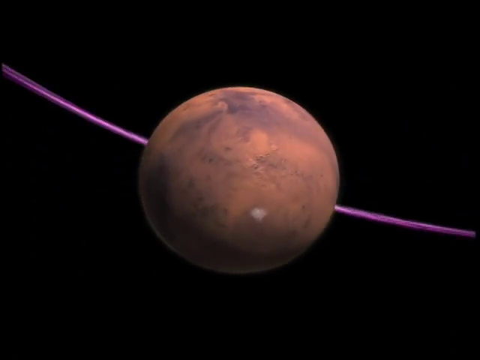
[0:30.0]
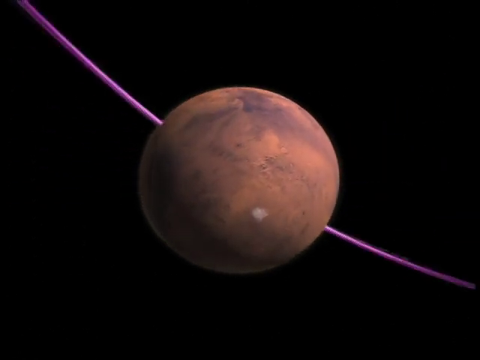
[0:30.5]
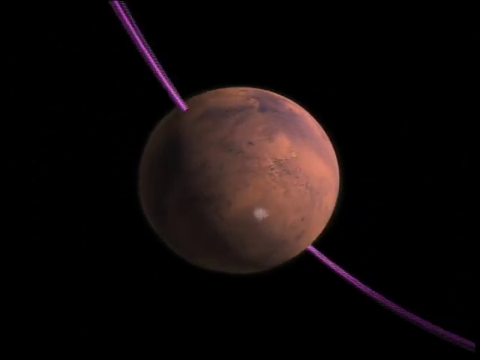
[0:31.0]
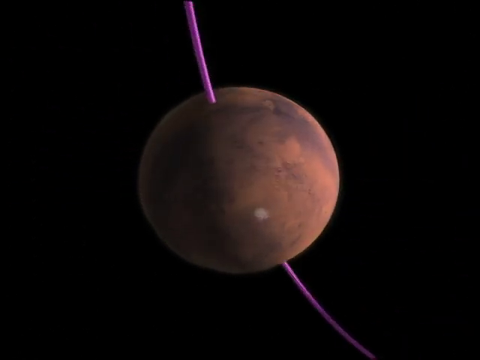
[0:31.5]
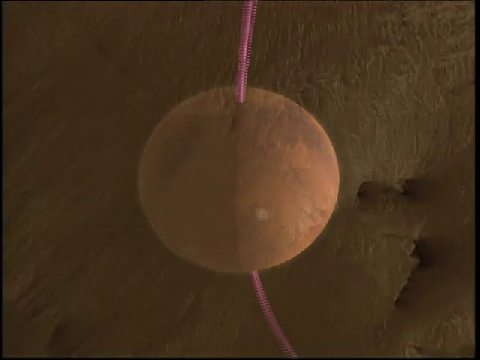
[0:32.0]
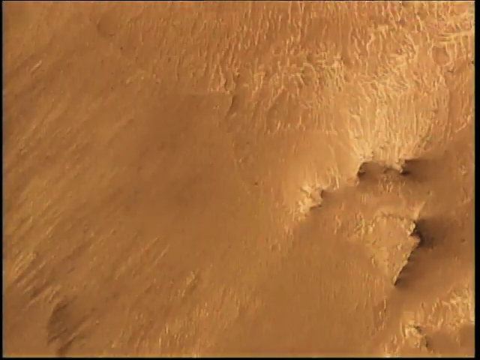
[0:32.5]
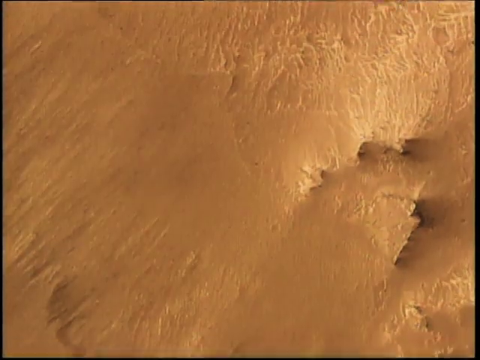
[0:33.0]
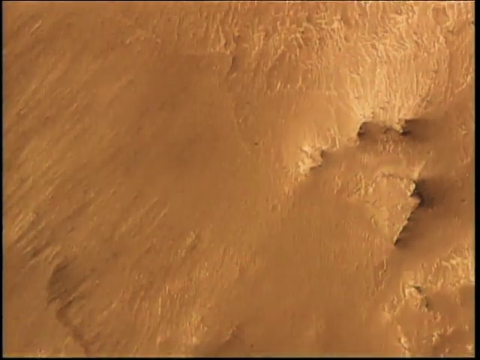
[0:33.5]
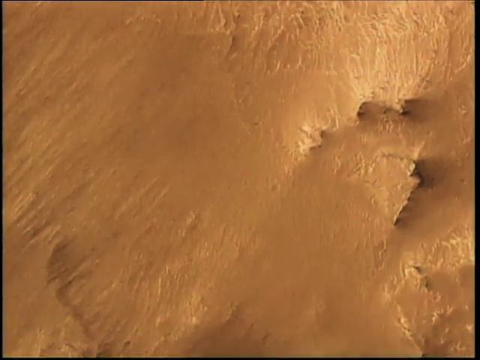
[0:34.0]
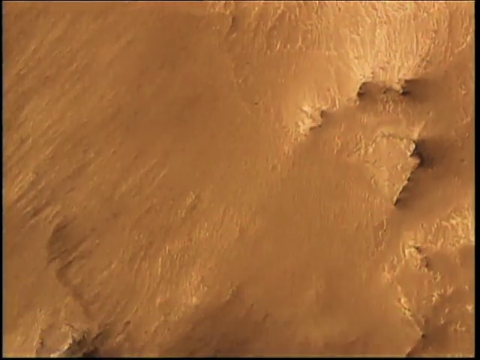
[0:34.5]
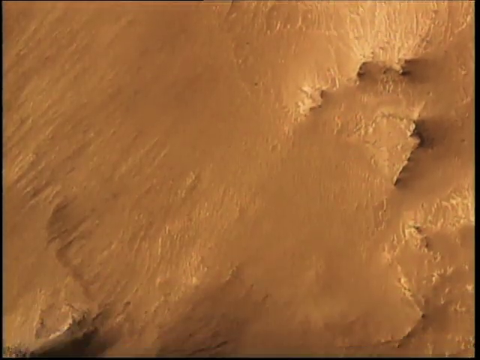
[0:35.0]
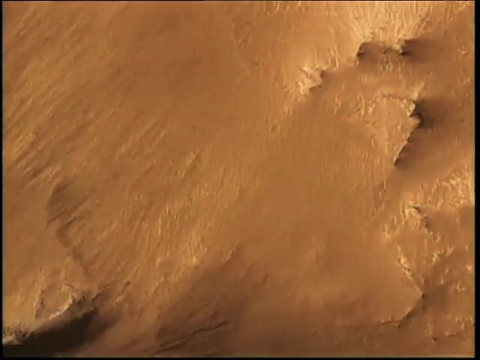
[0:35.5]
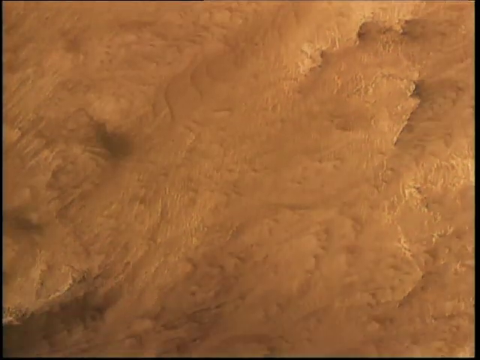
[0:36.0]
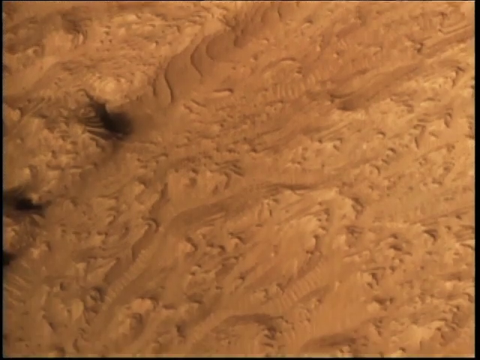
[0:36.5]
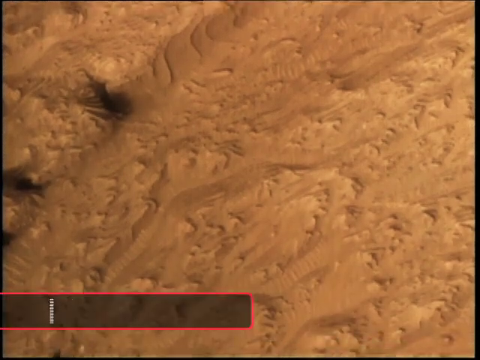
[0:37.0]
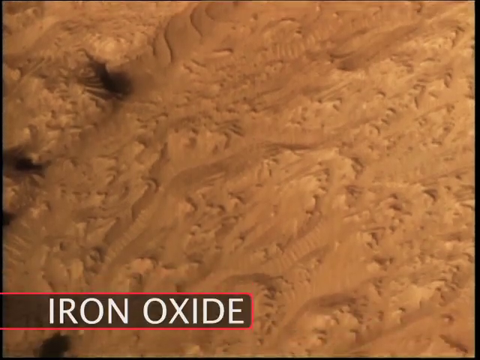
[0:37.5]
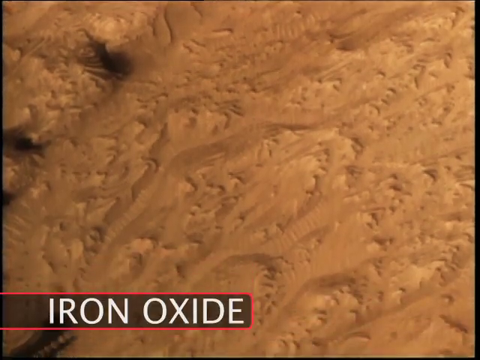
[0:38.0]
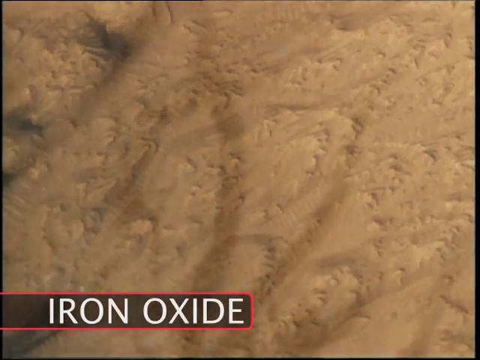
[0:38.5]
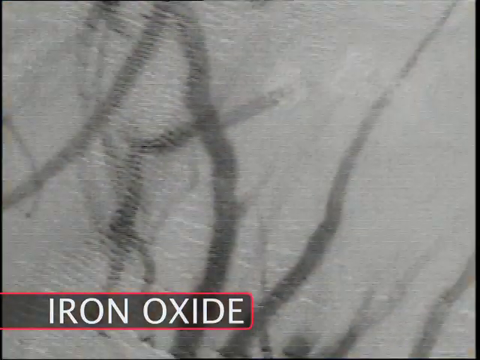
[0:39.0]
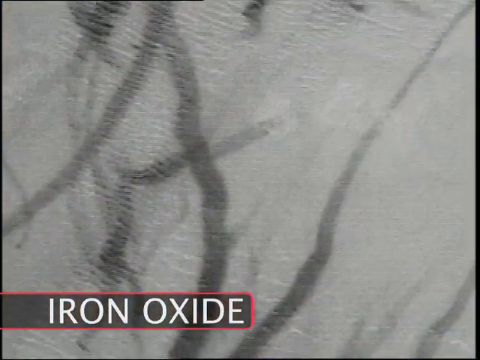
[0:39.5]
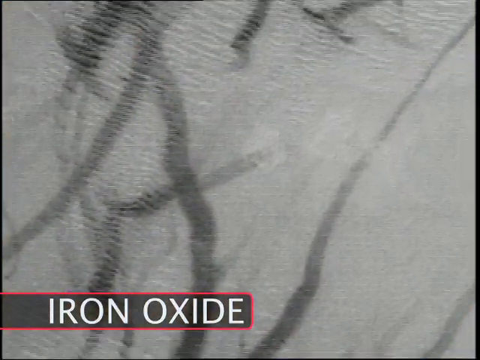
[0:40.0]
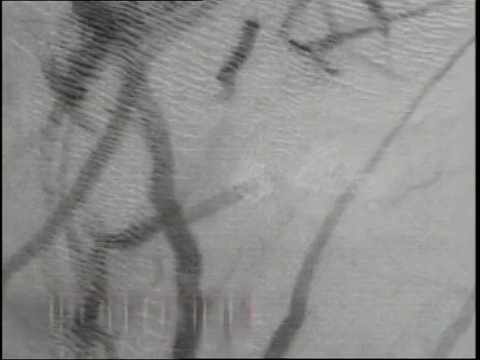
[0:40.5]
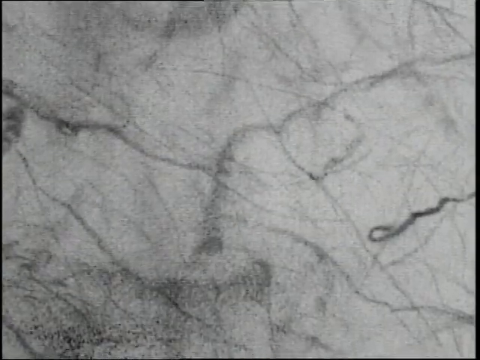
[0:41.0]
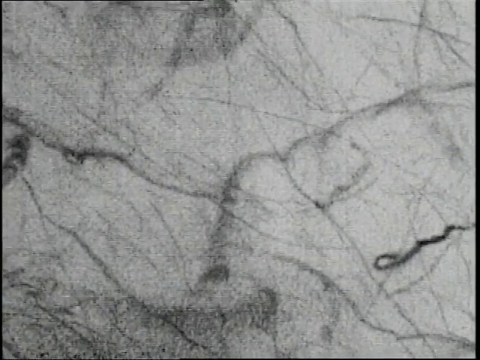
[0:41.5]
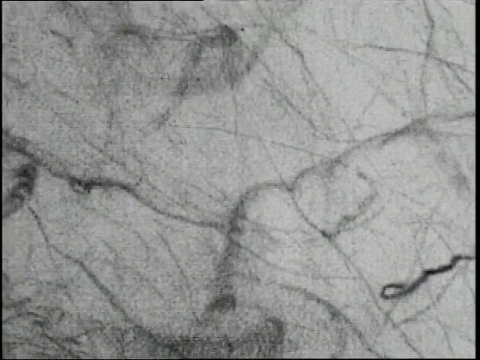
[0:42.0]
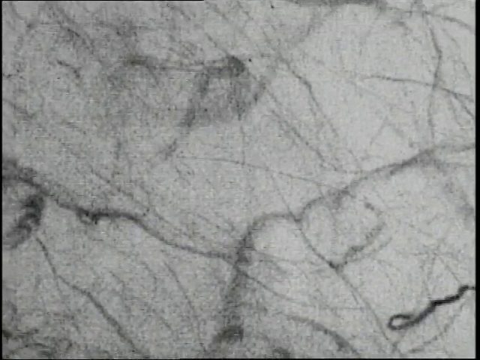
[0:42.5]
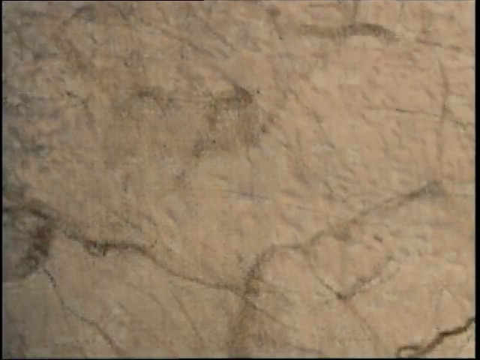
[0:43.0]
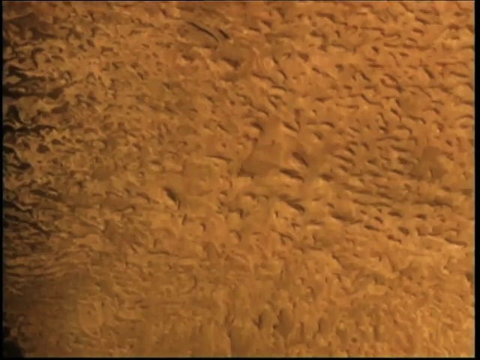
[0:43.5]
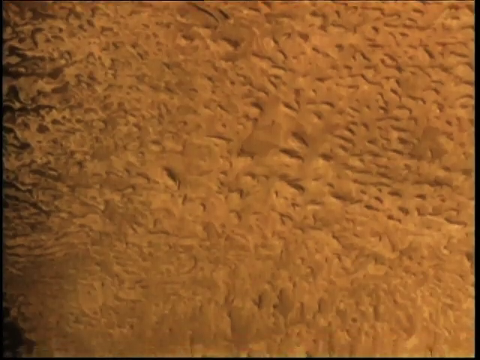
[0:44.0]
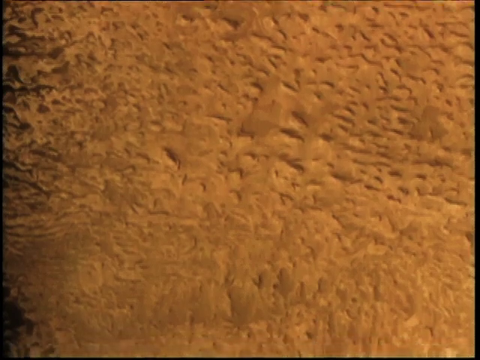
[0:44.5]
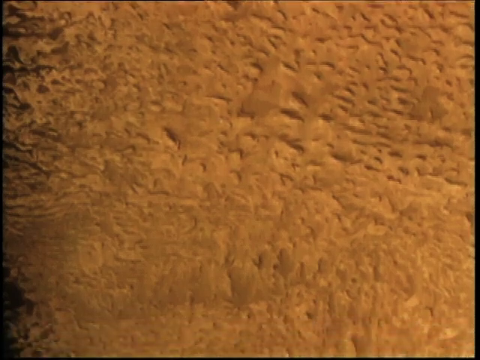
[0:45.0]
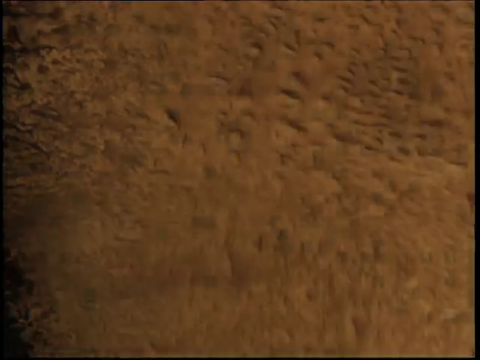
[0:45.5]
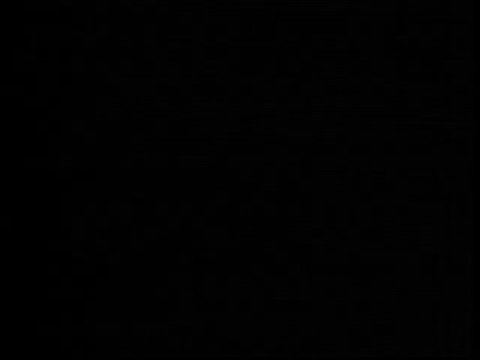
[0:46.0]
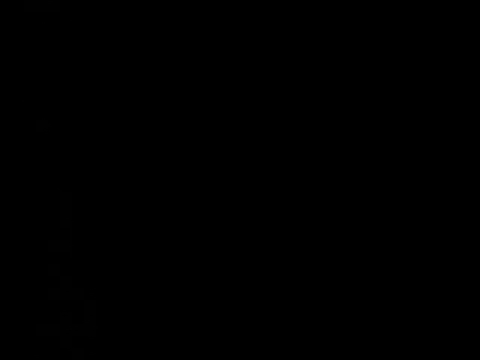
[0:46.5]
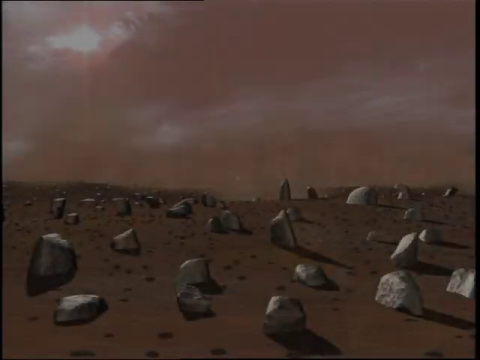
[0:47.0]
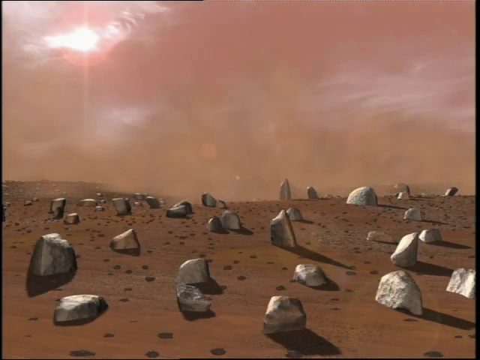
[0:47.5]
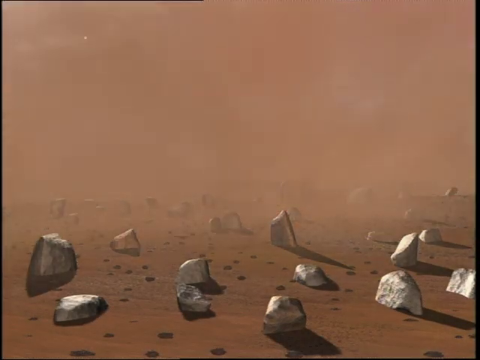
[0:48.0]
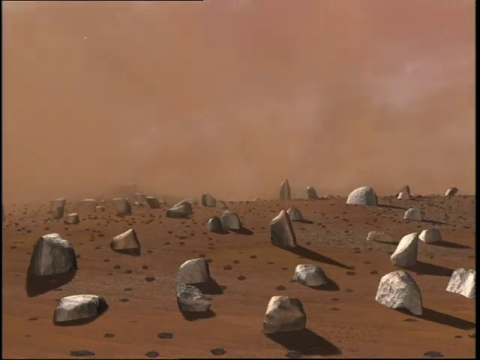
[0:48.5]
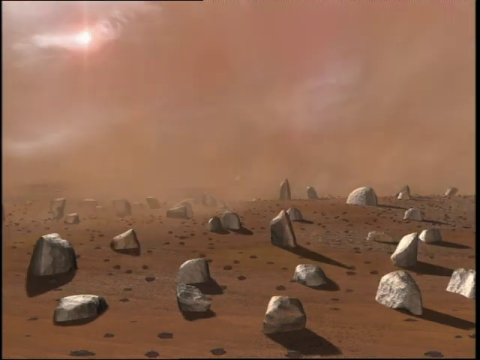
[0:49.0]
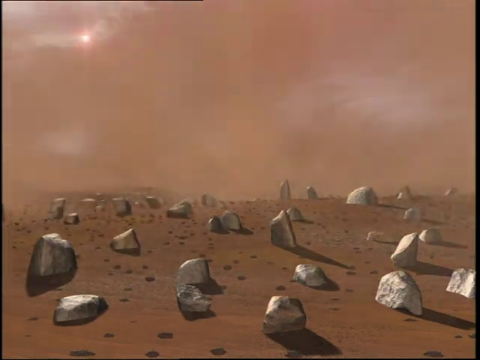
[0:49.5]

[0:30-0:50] A close-up view shows what looks like a planetary body, a perfectly round sphere rotating on an axis, with the axis represented by a curved line in deep violet. Next comes a view of some sort of landmass that looks covered with ice, with a few crevices on the right side of the mass. The camera pans downwards over the mass, which is a mix of beige and light brown, with a rough, craggy-looking surface. White text reading "iron oxide" pops up in the lower left corner on a black background with a red trim around it. A gray screen with rough dark gray lines follows, and the camera pans upward to show more of it. The rough surface seen earlier appears again, looking brownish, with what look like tiny craters in it. The scene then transitions to a landmass that looks covered with reddish, dusty sand, with small silvery rocks dotted all over it, and the sand is blown by wind over the rock-covered land.